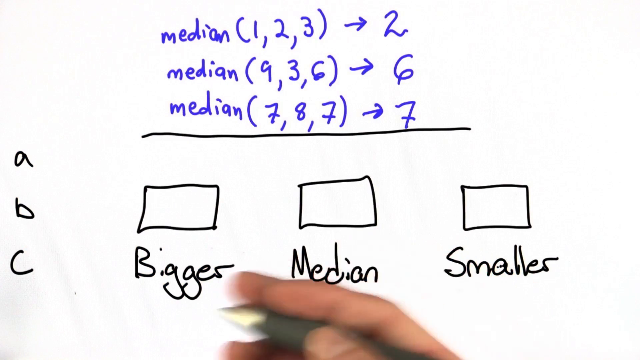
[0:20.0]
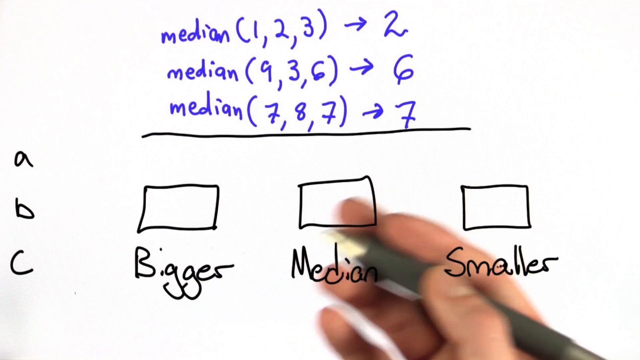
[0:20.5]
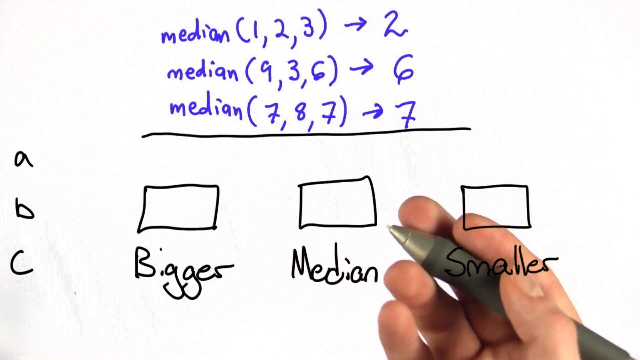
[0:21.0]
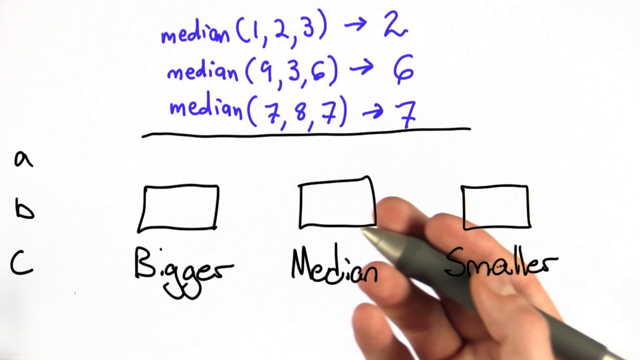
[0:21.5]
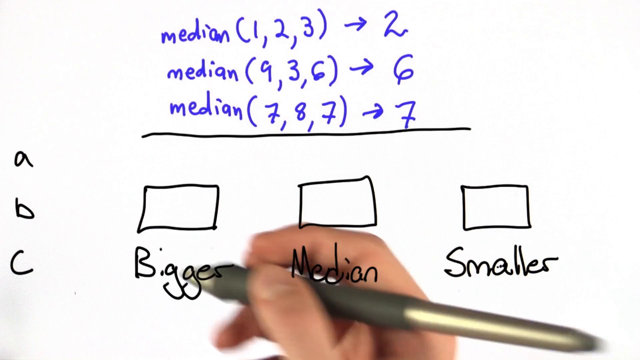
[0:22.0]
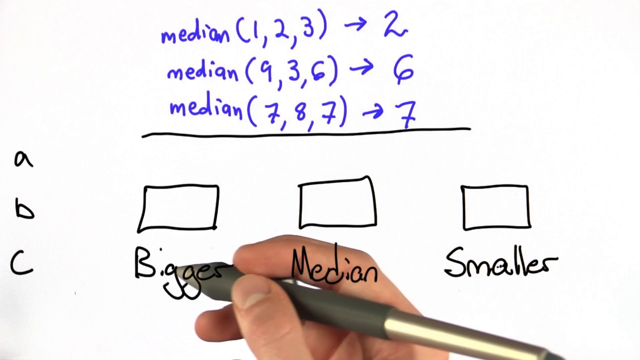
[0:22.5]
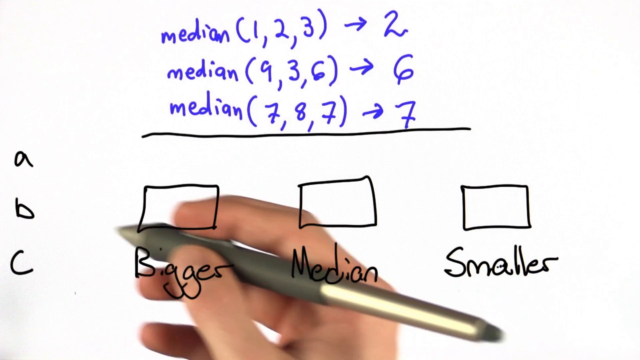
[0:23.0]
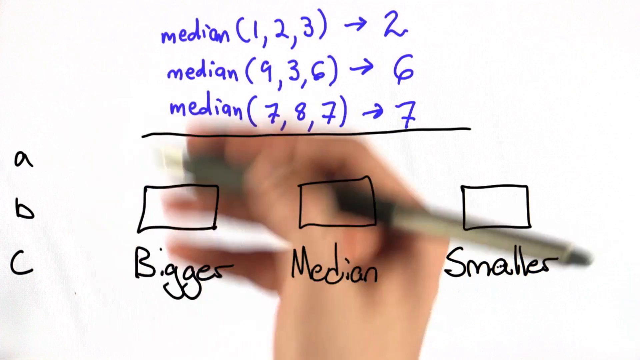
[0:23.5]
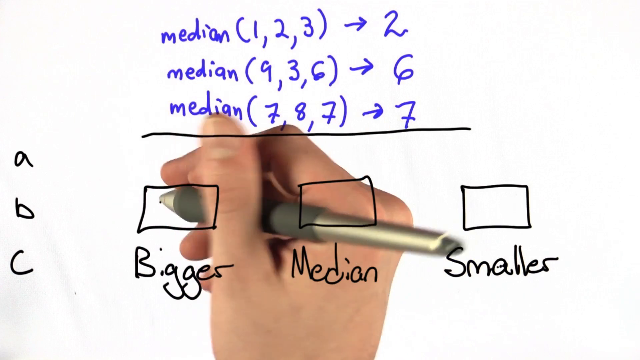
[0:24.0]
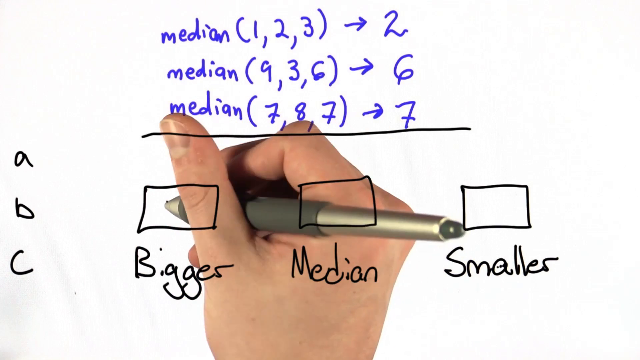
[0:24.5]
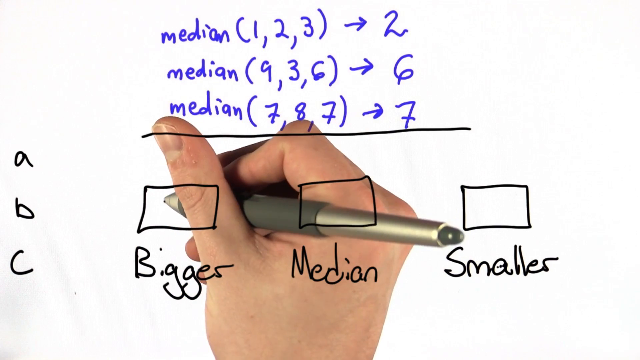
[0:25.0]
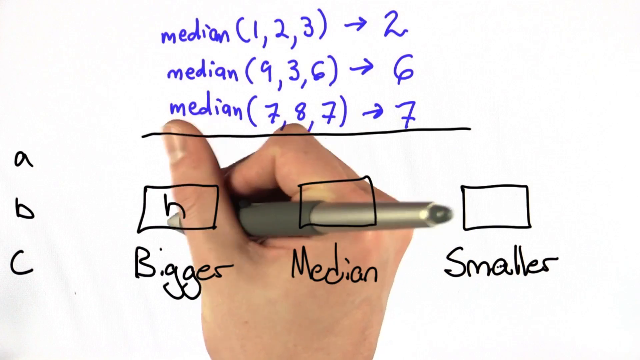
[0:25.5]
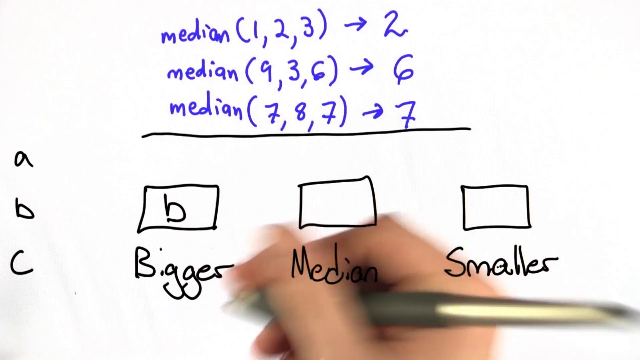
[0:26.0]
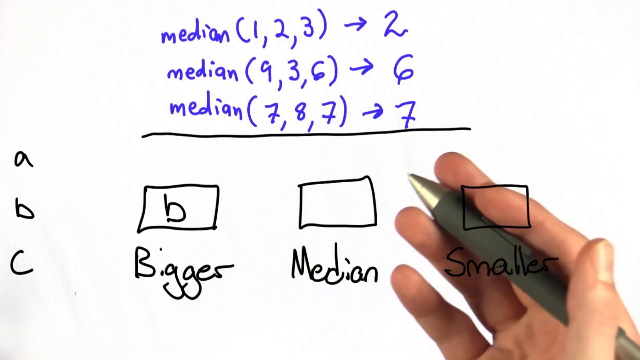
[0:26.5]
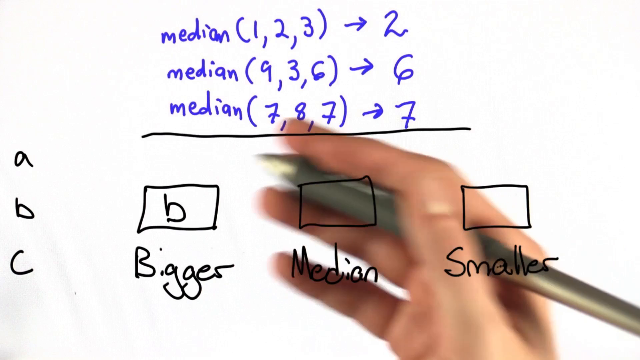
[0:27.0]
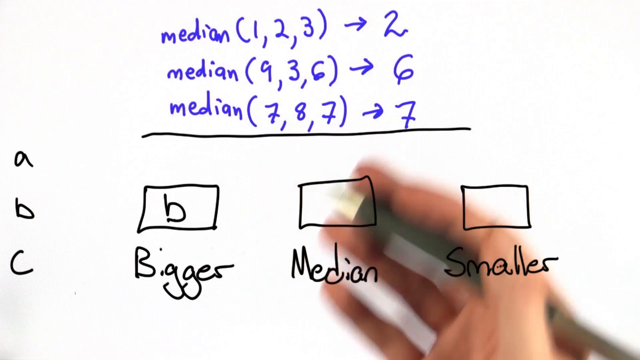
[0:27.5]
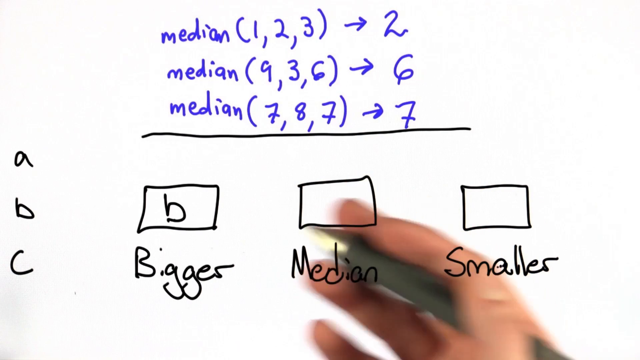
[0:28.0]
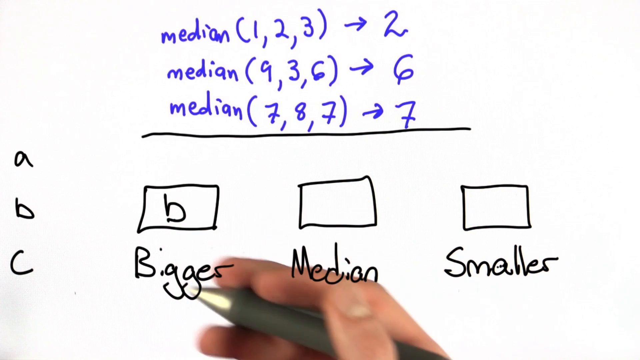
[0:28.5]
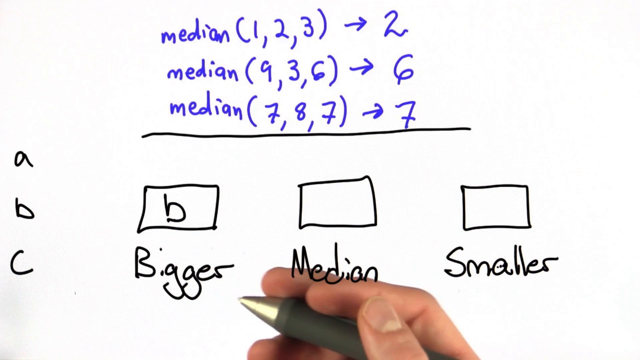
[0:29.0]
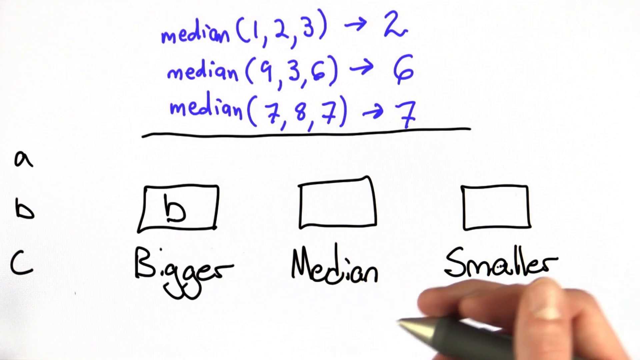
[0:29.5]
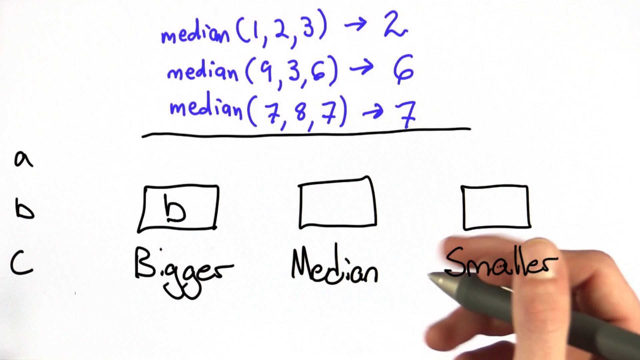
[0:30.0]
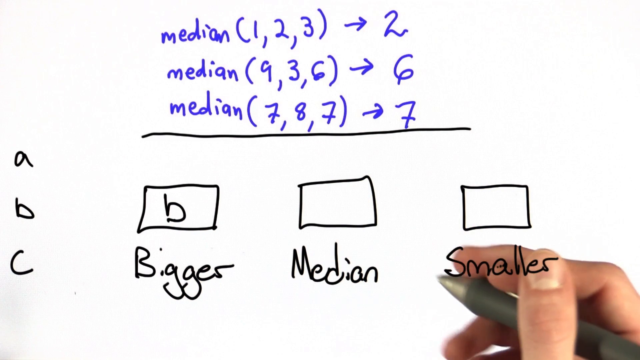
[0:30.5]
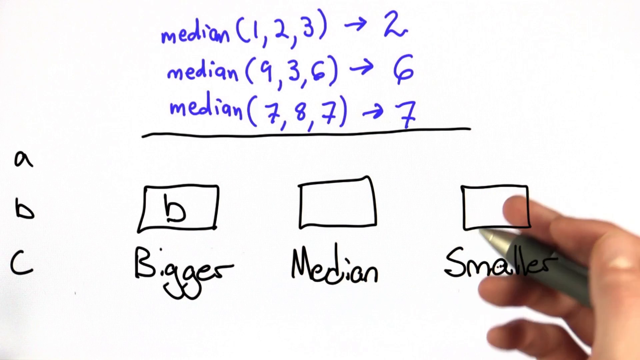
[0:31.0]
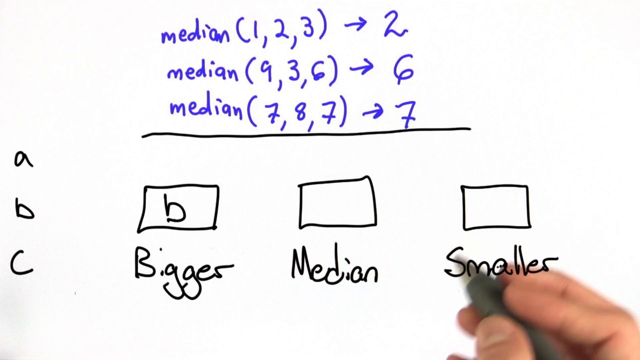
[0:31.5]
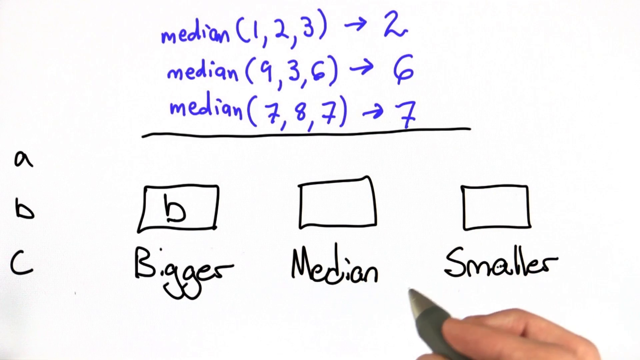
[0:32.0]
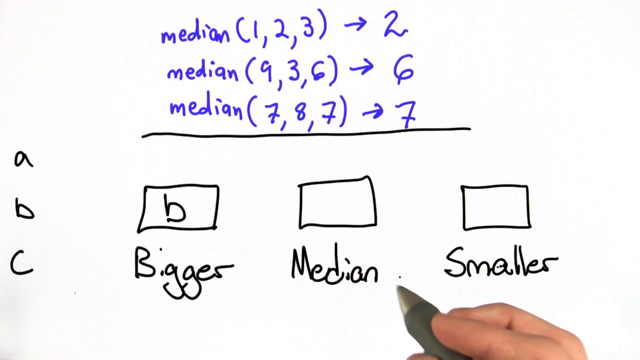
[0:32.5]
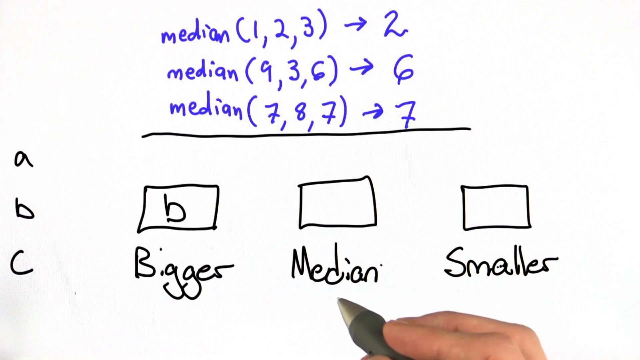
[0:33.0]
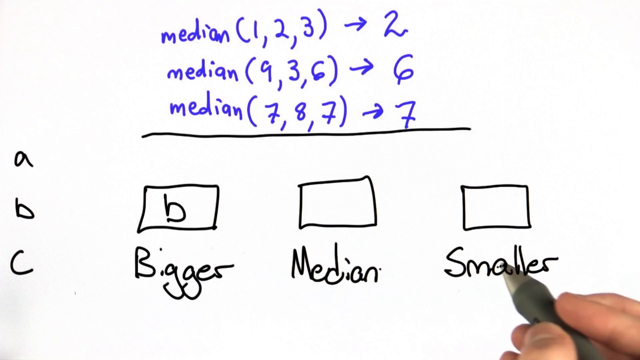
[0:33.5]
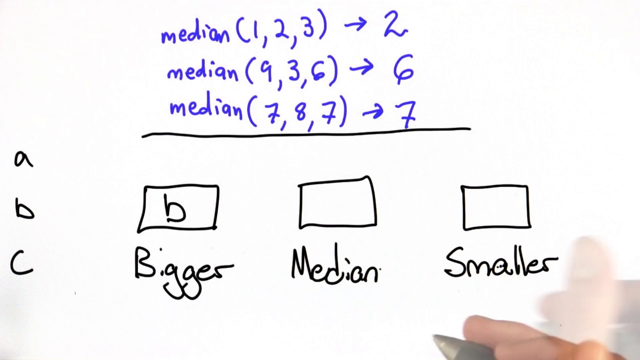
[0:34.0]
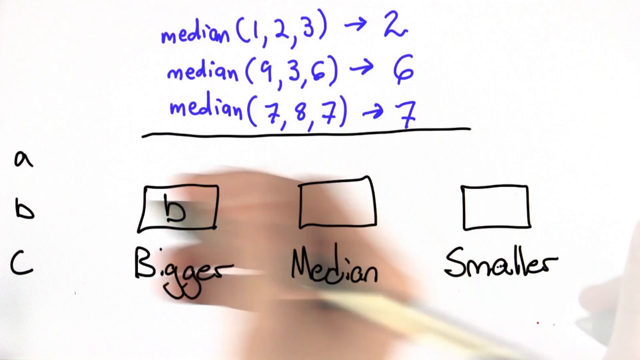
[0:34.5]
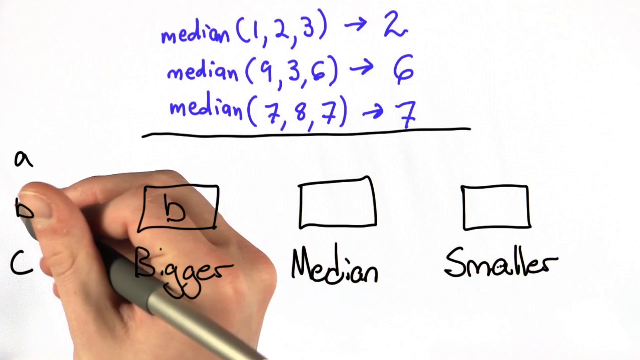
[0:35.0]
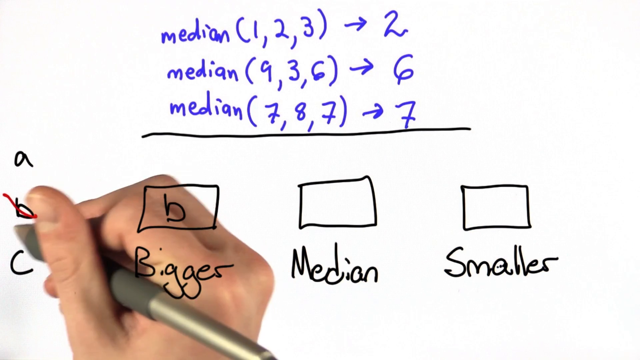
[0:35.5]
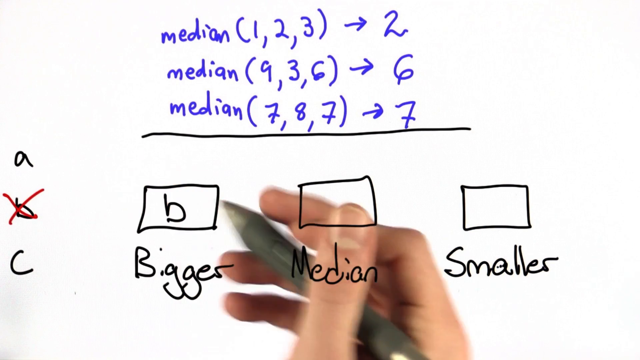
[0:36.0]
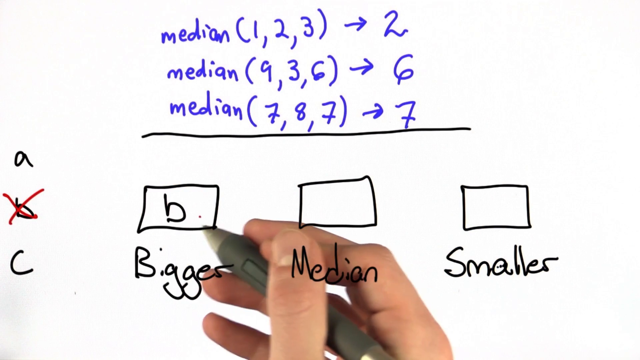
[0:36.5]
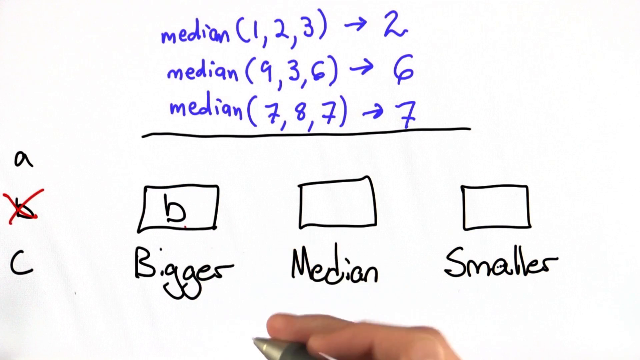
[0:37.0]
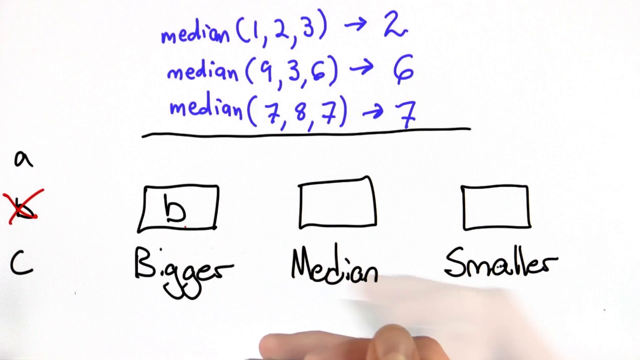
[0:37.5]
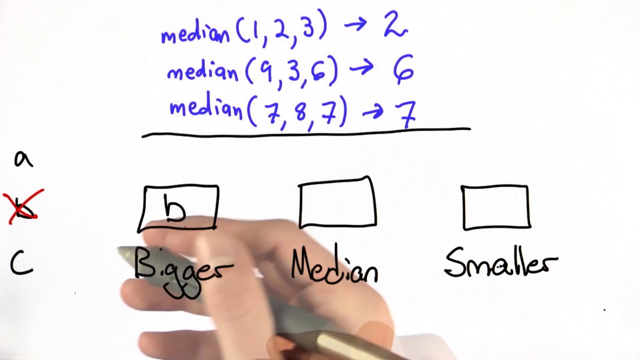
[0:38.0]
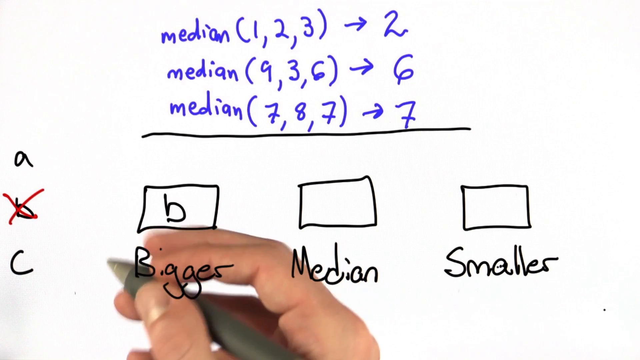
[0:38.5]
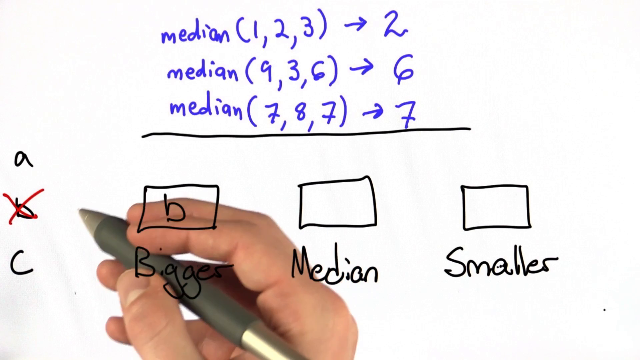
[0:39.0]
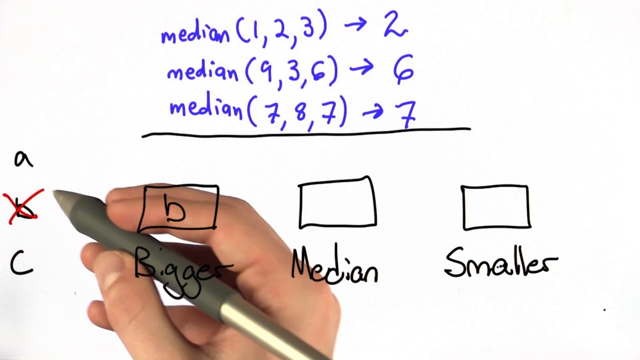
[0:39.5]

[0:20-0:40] The medians are still displayed, written on a white background: the first median is 2, the second is 6 and the third is 7. The person has written A, B, C, along with "bigger", "median" and "smaller", and has drawn three boxes, one on top of each respectively. Option B is put in a box and then crossed out. The person holds a grey pen with a silverish carving at the bottom; it seems to be a digital pen.